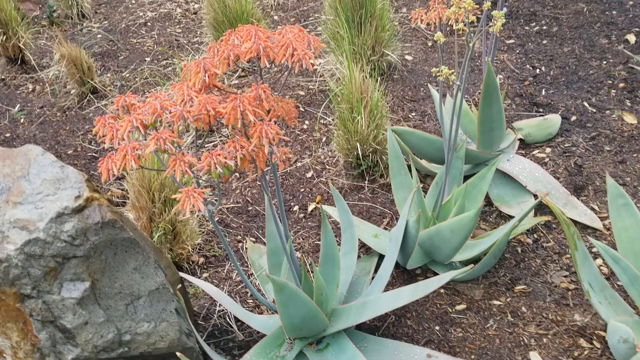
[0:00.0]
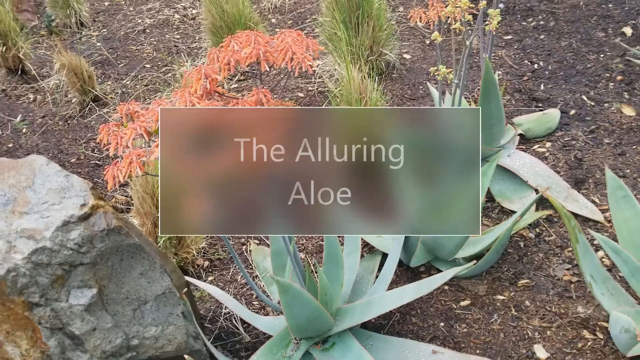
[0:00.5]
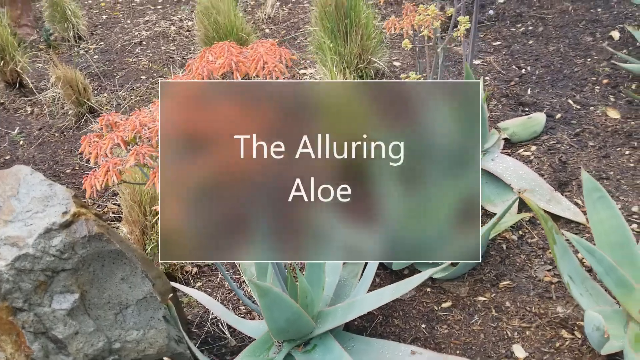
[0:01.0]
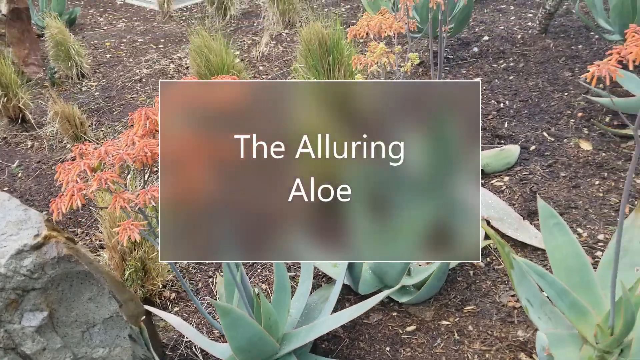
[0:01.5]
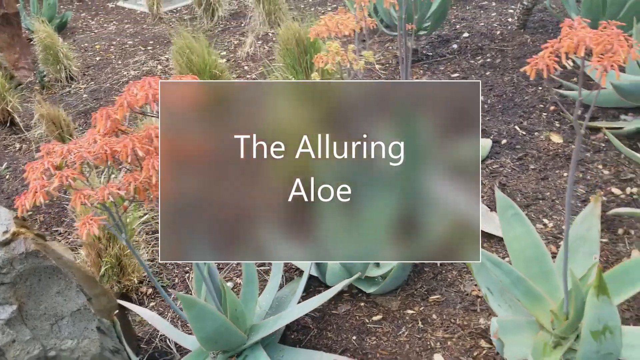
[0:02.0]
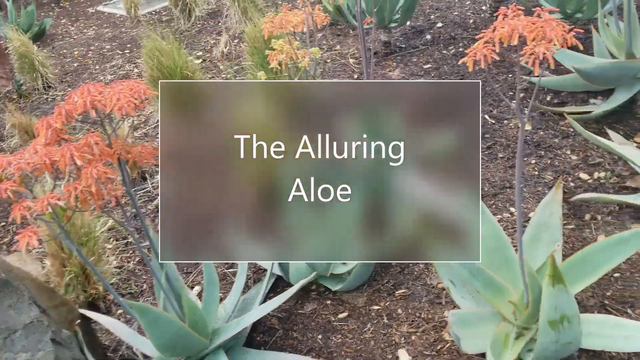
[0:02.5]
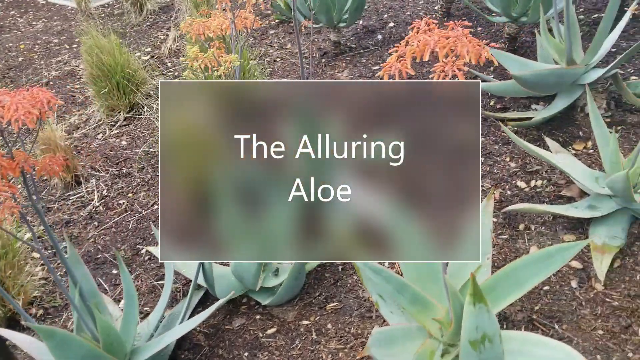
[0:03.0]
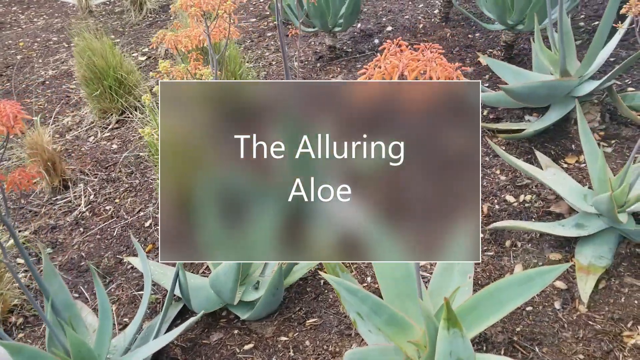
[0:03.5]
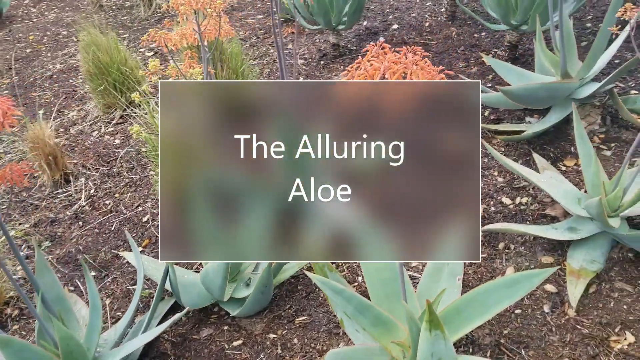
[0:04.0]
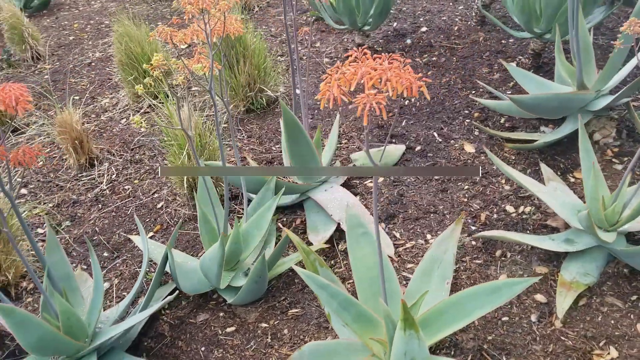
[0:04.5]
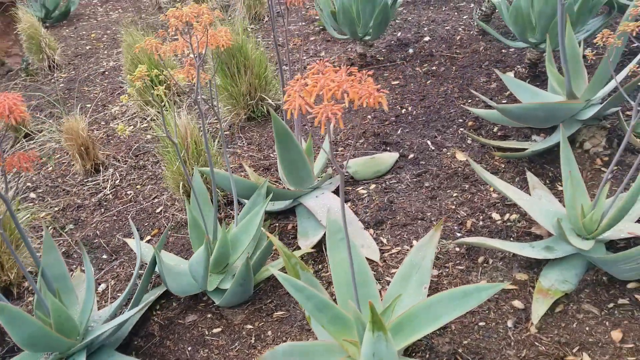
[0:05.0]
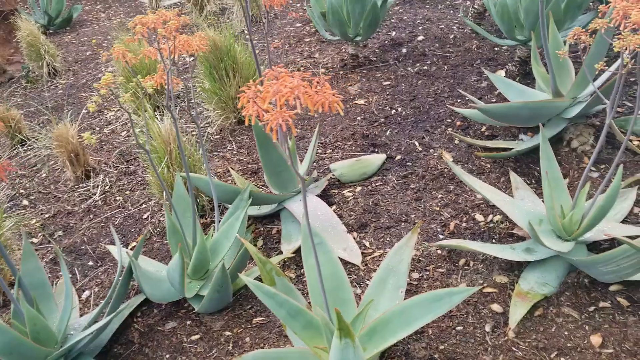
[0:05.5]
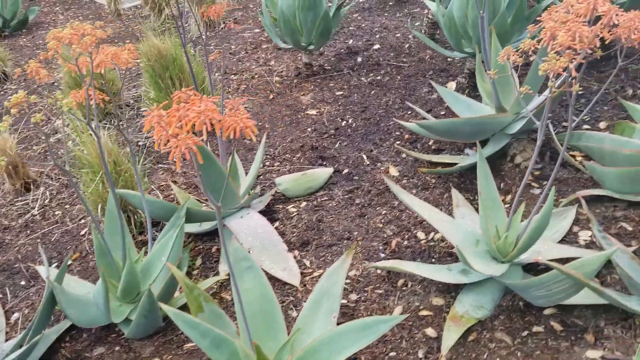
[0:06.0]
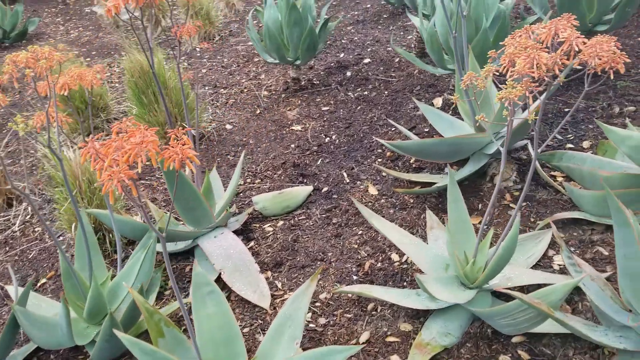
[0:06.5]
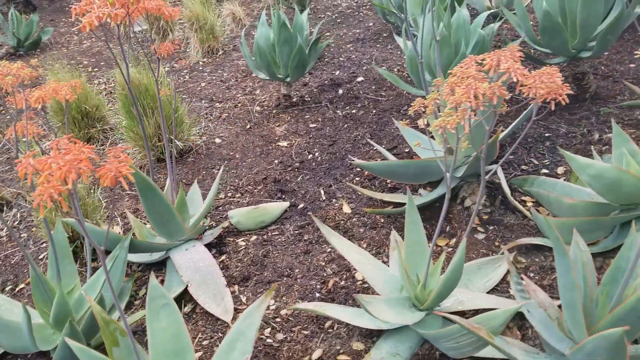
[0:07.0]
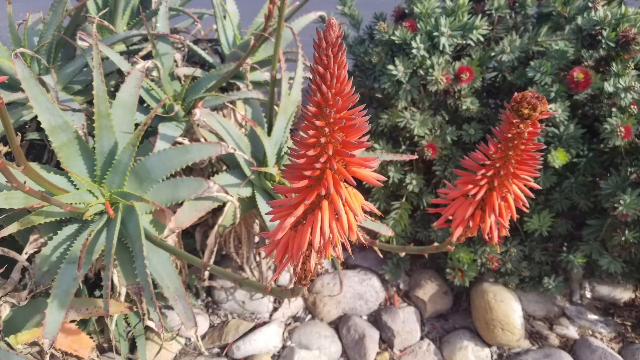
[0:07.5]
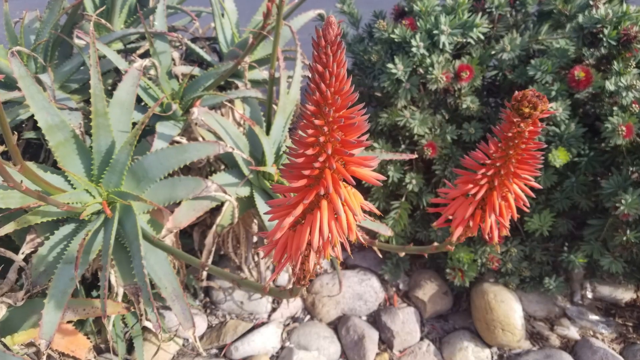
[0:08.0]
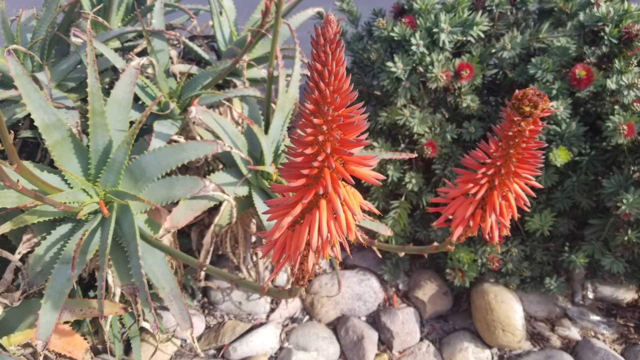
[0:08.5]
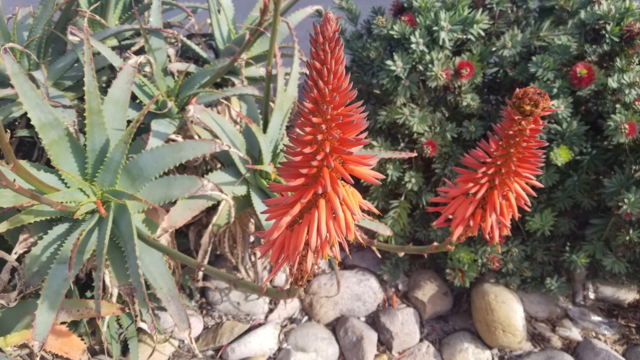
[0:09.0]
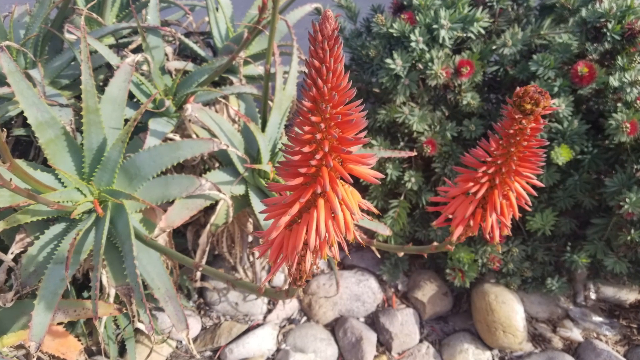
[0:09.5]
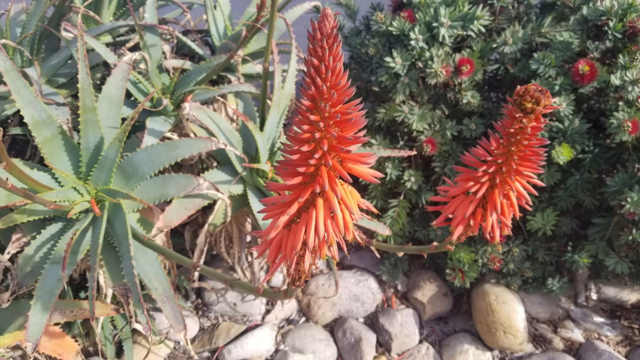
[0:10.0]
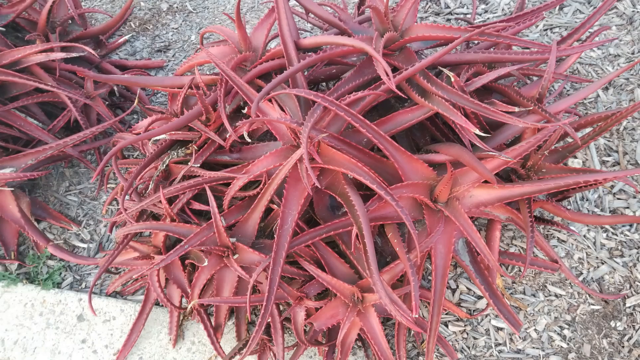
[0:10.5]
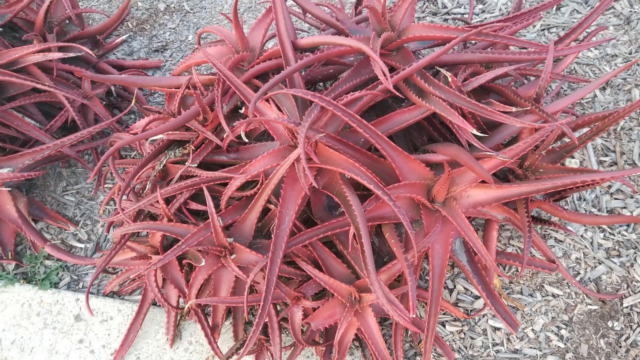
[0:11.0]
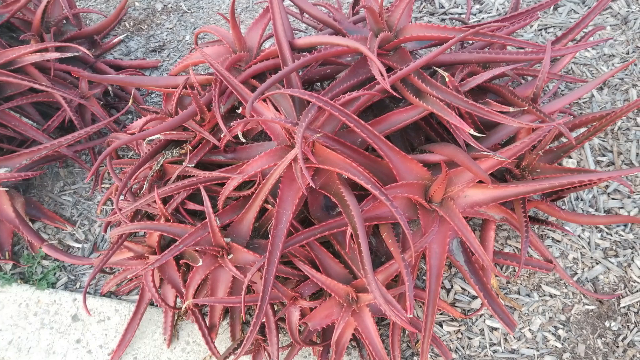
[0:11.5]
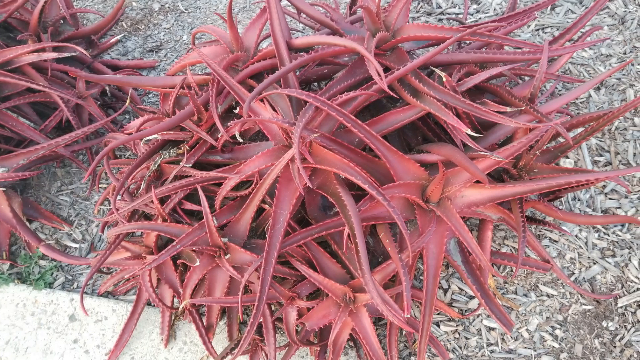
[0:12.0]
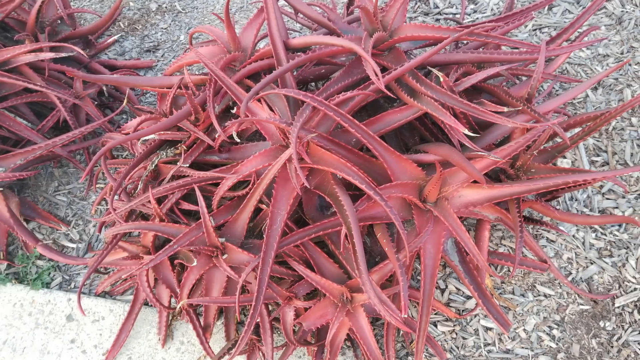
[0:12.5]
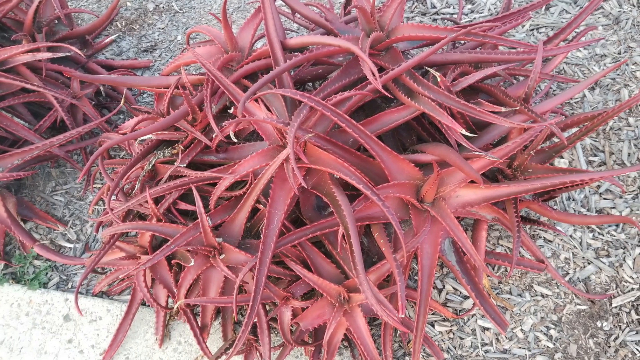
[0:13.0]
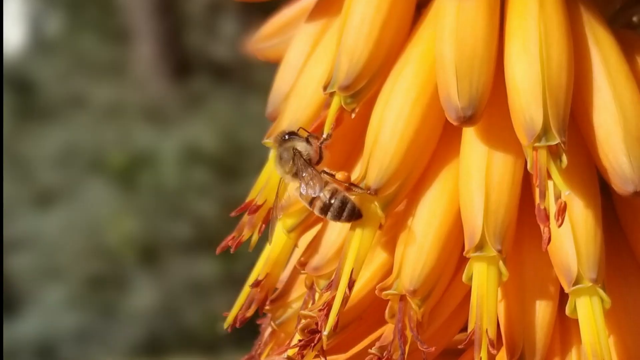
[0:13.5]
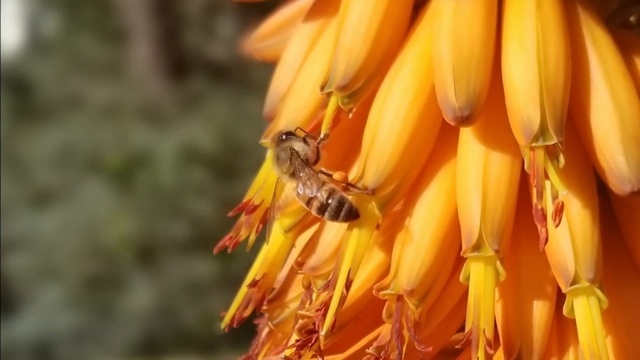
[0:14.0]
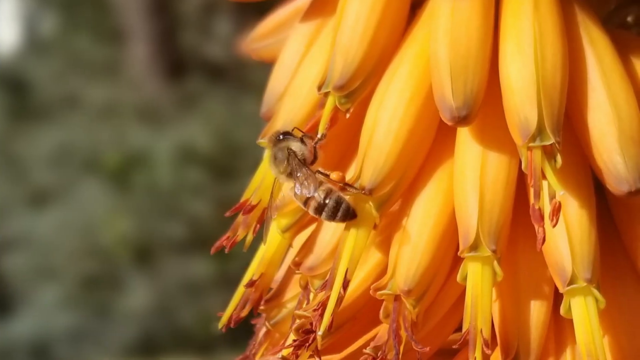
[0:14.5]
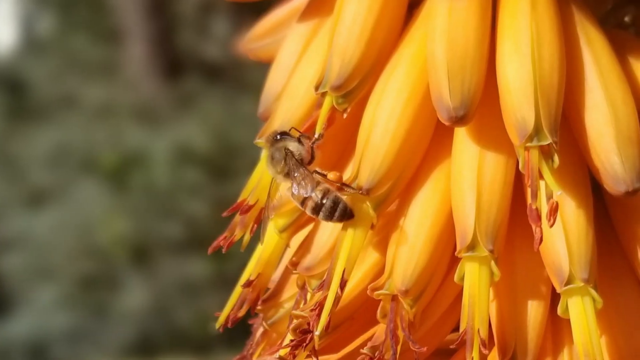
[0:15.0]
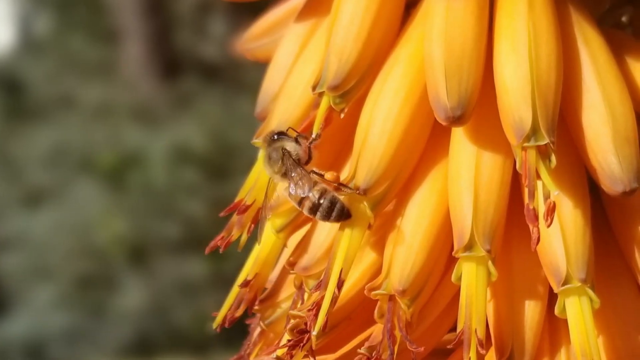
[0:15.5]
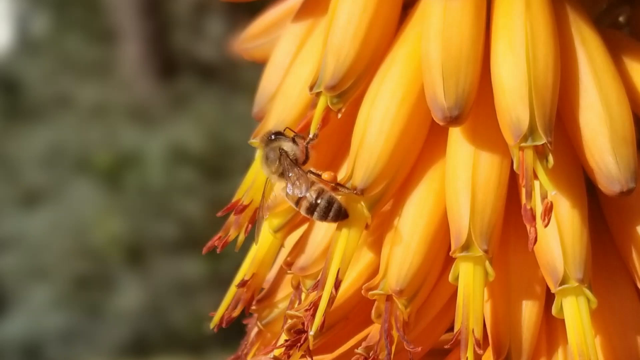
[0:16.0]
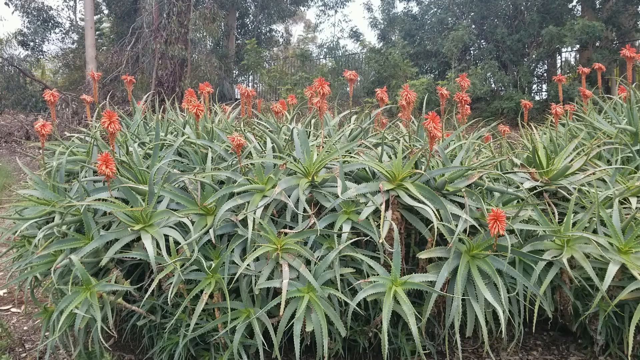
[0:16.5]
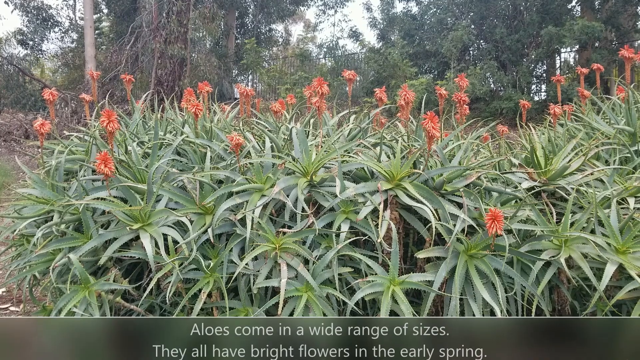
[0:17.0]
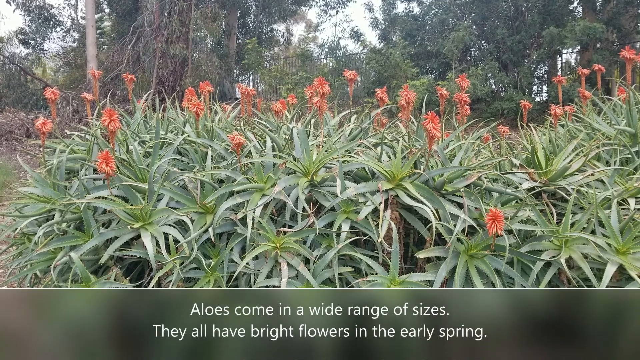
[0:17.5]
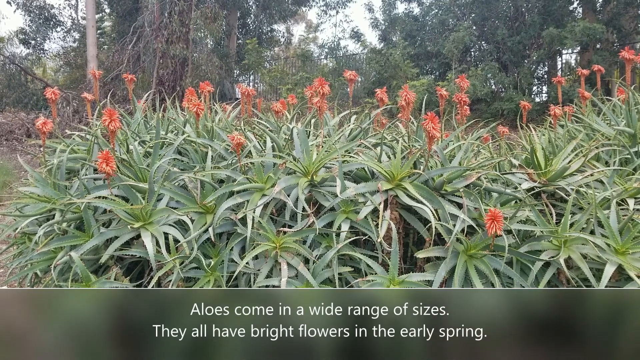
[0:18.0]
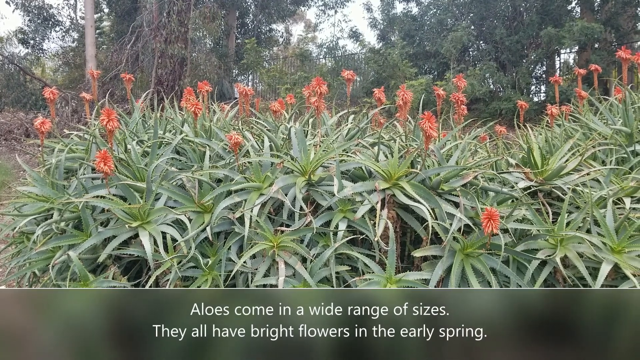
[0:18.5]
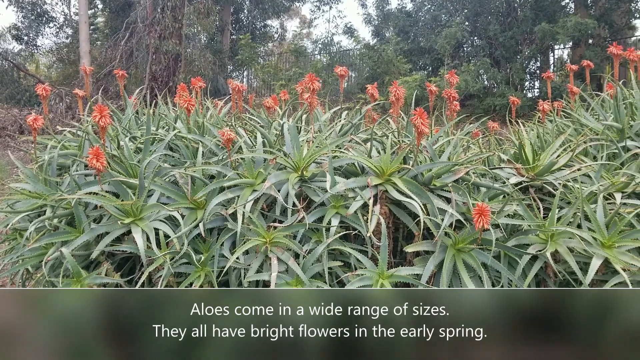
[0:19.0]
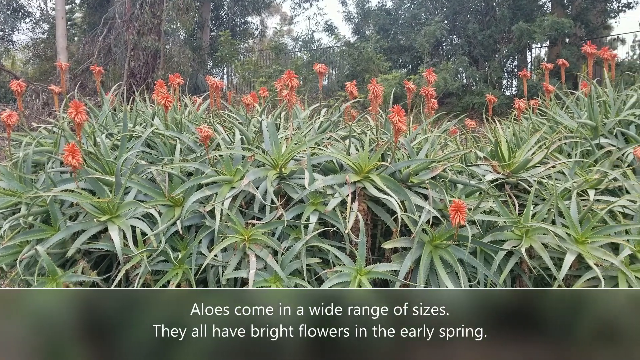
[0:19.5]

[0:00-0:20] The video opens on some plants; as the camera pans, quite a few of them come into view. They have thick green leaves at the bottom and almost little orange flowers. Text pops up on the screen reading "the alluring aloe"; these are aloe plants. The video shows them from other angles and cuts to various other plants: big green plants and a yellow plant. It then cuts to a red version of the aloe. Later there is an extreme close-up of a yellow plant with a bee on it, apparently pollinating the flower bud at the top of an aloe; the small yellow area may simply be the extremely close view. After the close-up comes a more distant shot of quite a bit of aloe, with text at the bottom of the screen about a wide range of sizes.